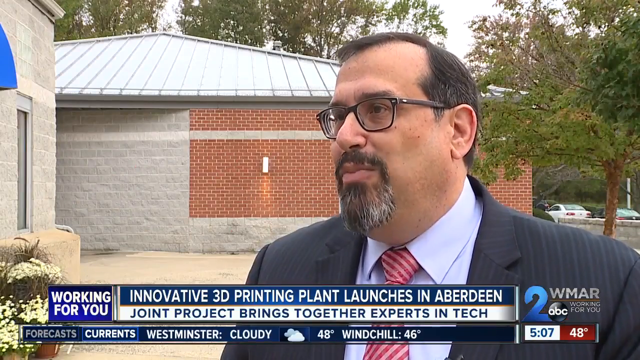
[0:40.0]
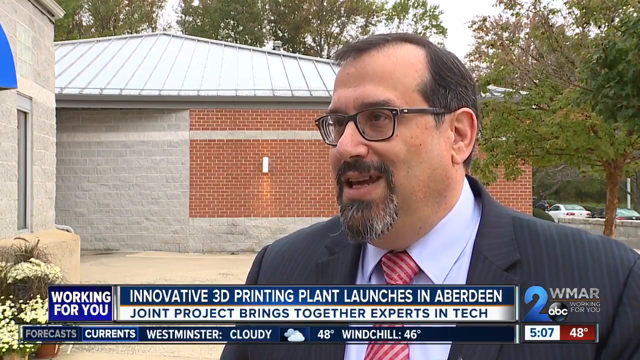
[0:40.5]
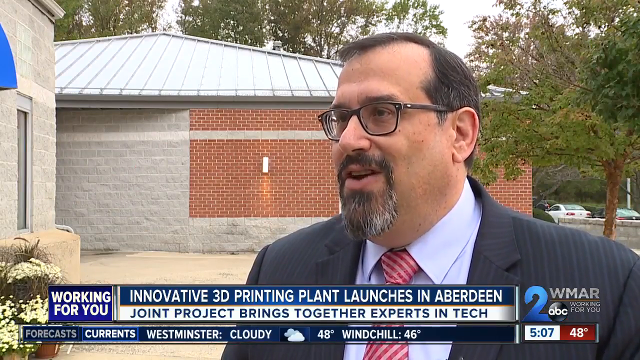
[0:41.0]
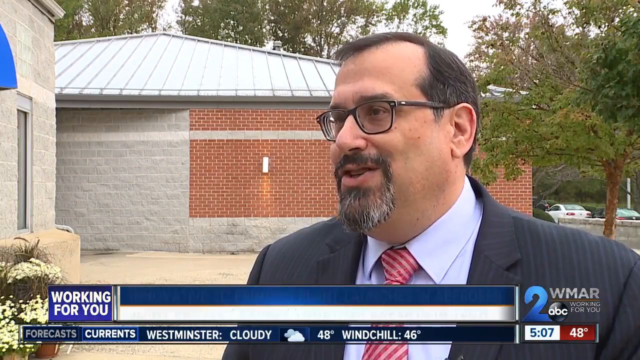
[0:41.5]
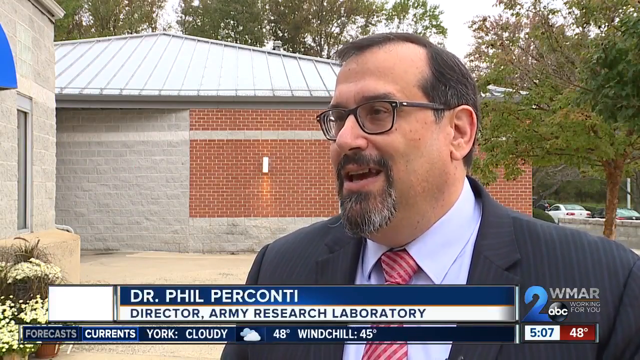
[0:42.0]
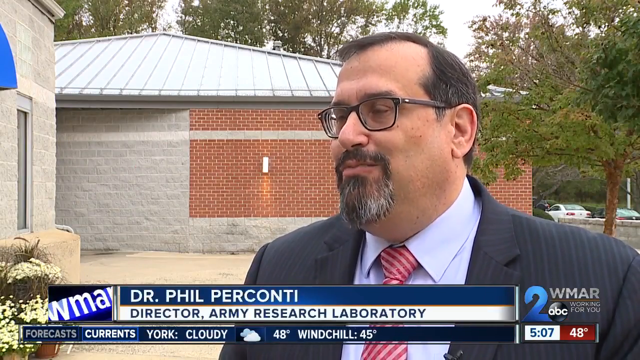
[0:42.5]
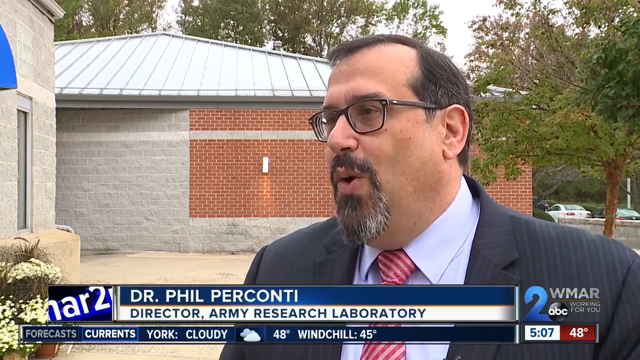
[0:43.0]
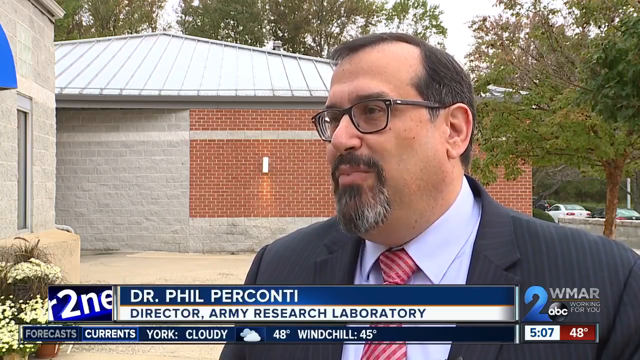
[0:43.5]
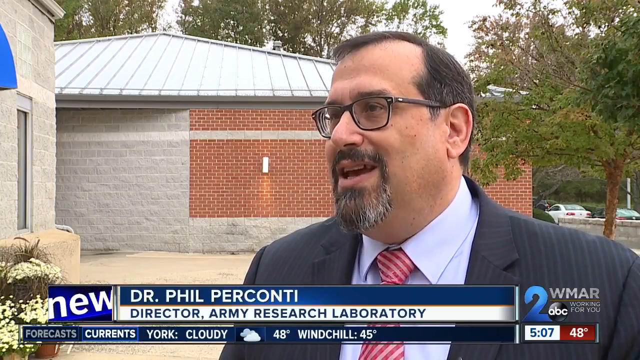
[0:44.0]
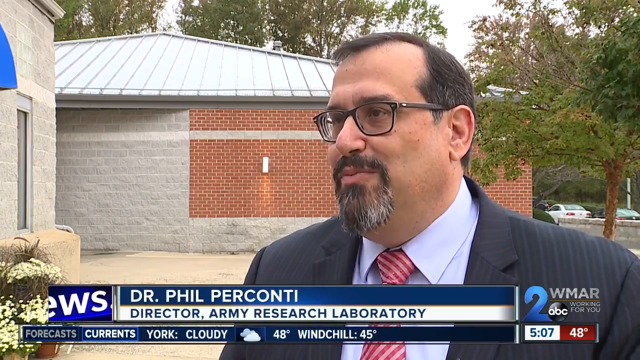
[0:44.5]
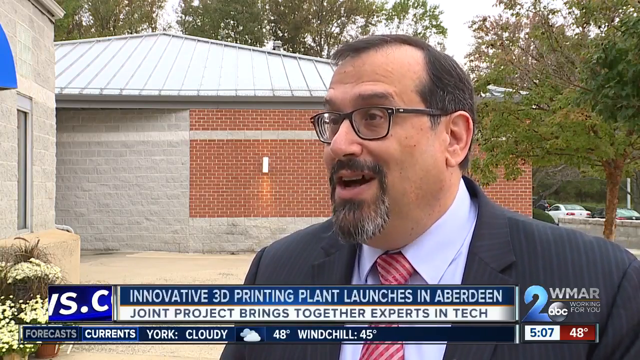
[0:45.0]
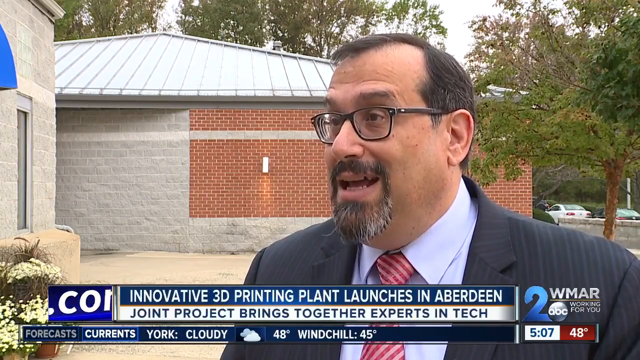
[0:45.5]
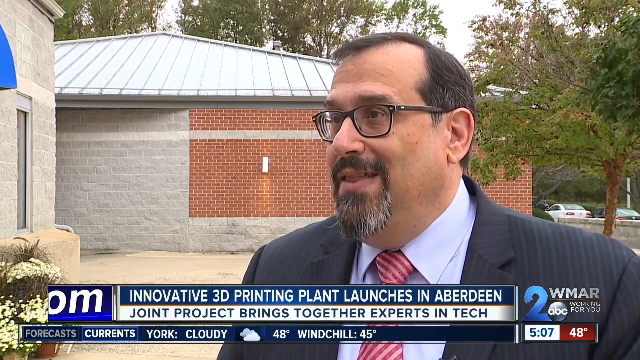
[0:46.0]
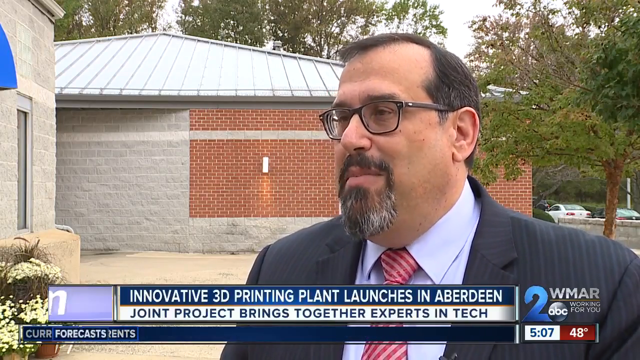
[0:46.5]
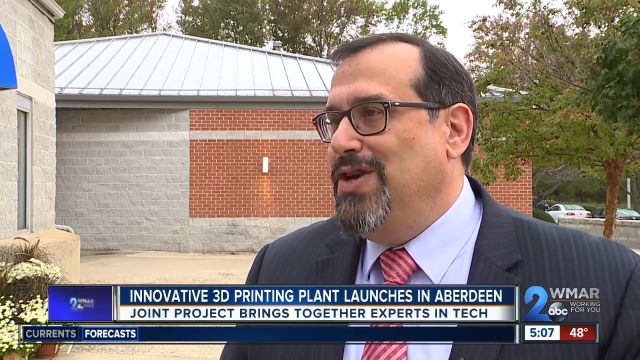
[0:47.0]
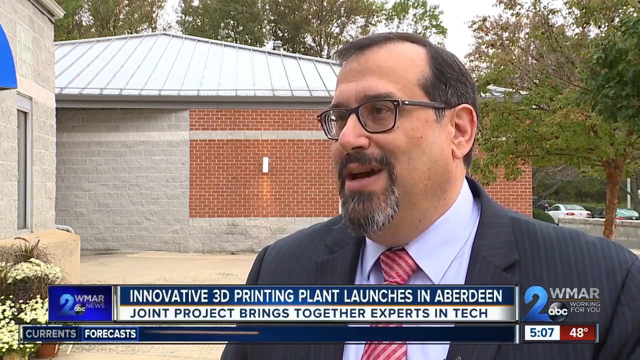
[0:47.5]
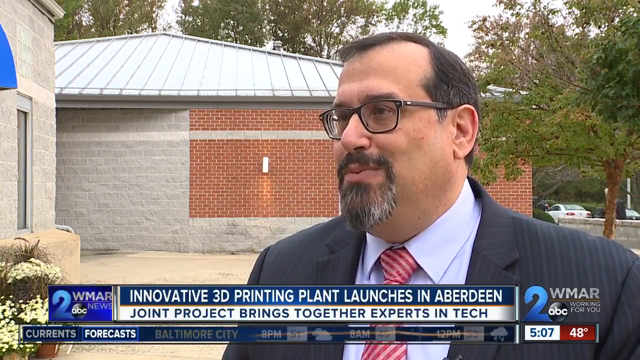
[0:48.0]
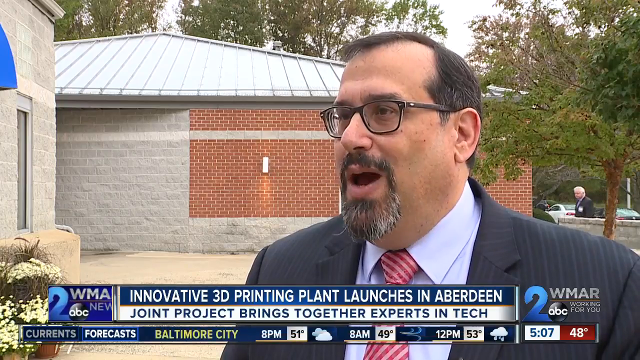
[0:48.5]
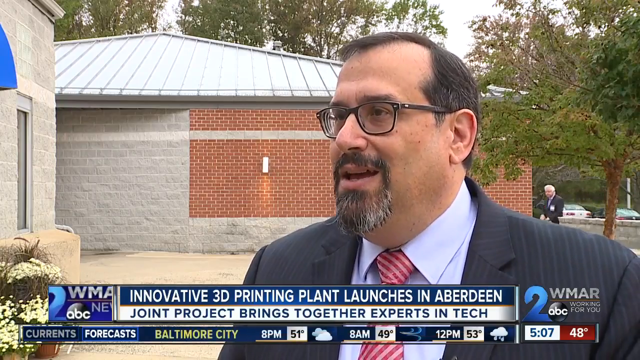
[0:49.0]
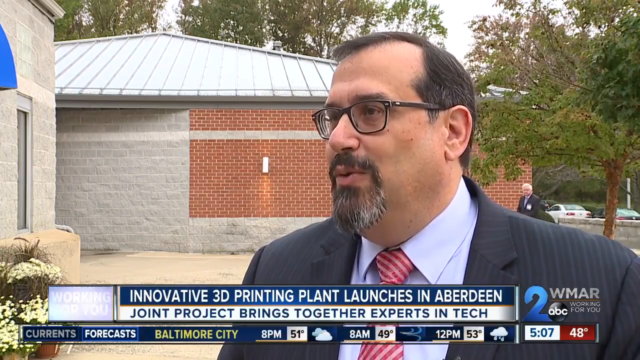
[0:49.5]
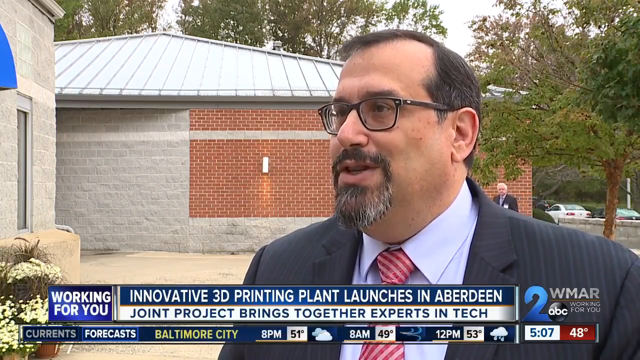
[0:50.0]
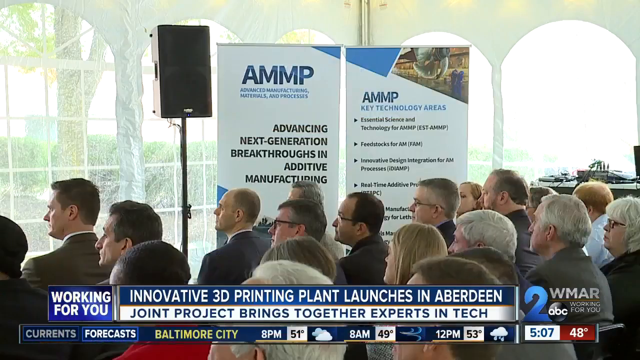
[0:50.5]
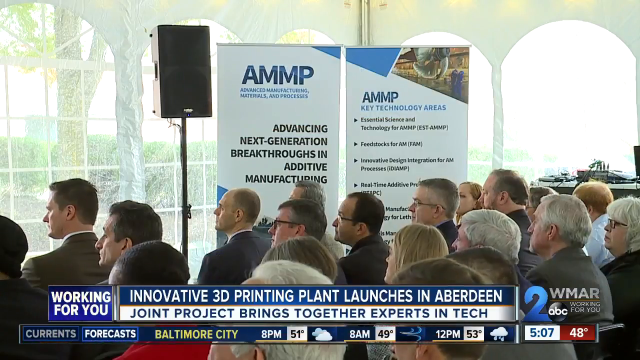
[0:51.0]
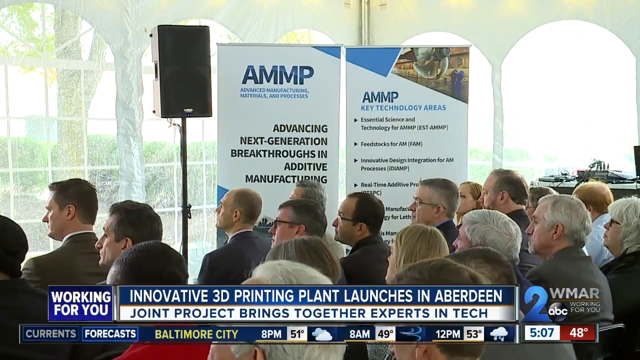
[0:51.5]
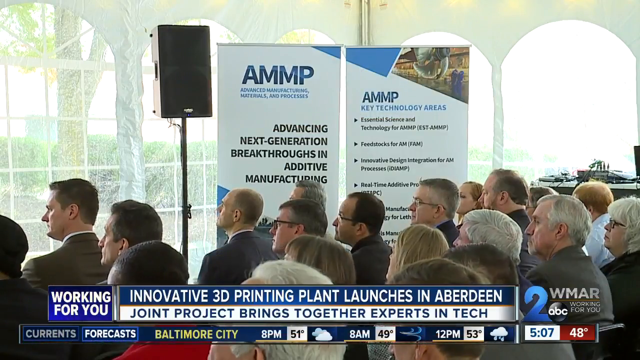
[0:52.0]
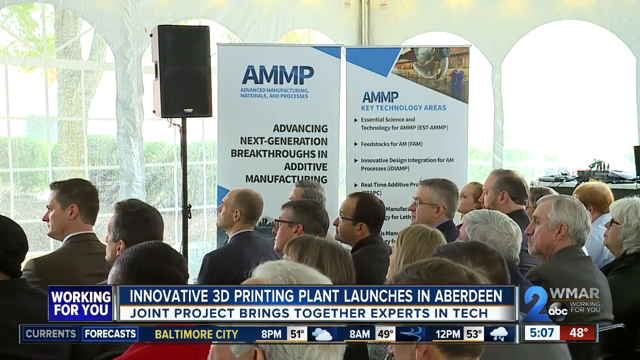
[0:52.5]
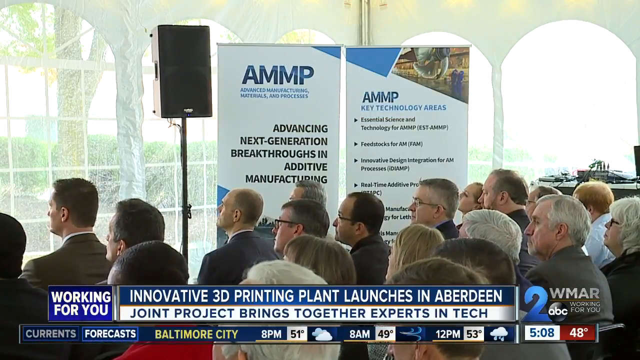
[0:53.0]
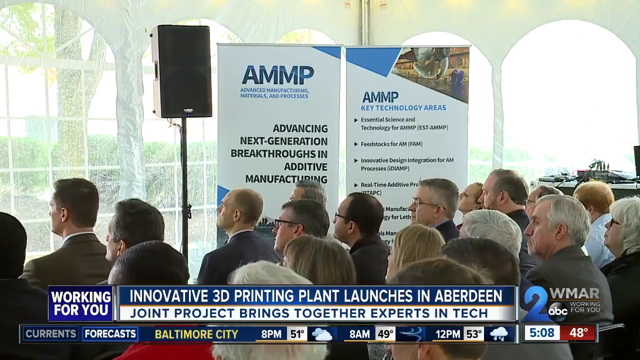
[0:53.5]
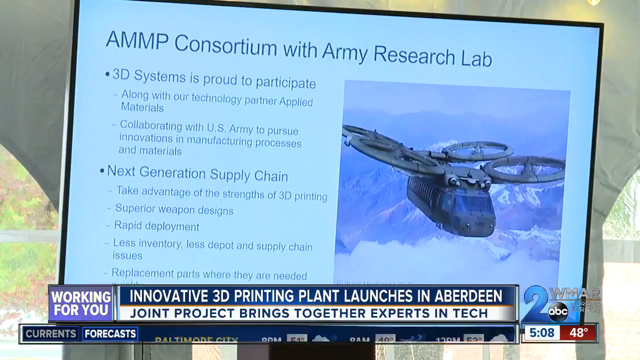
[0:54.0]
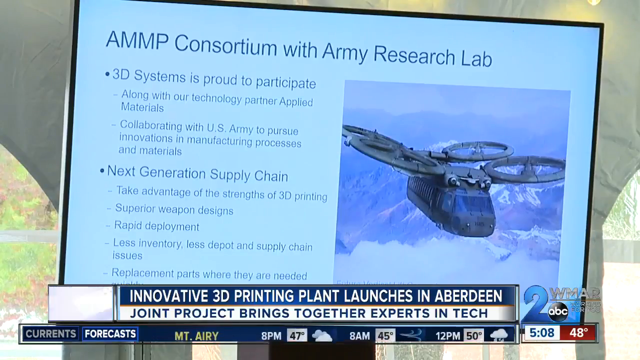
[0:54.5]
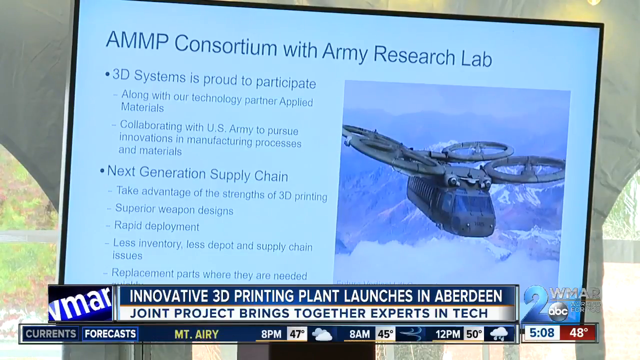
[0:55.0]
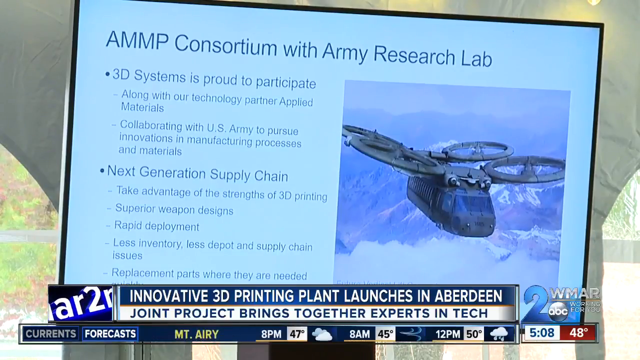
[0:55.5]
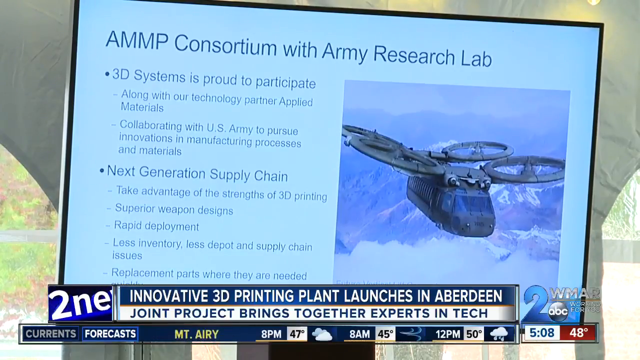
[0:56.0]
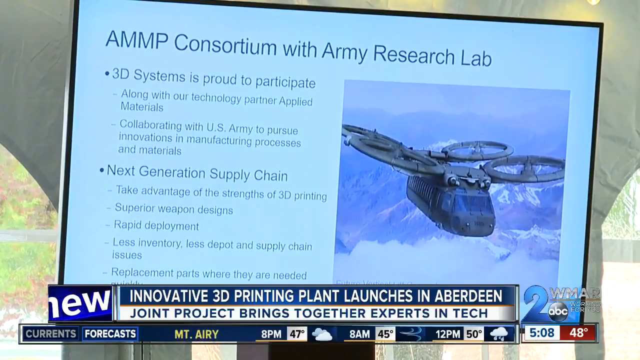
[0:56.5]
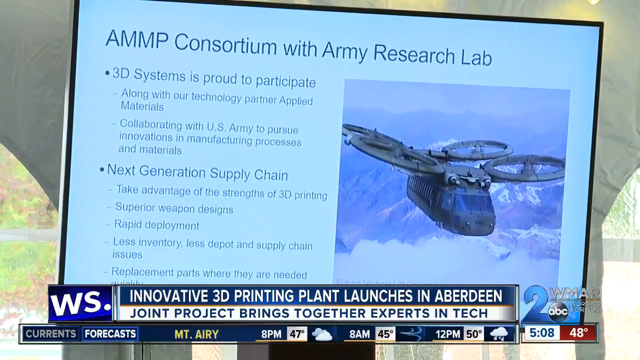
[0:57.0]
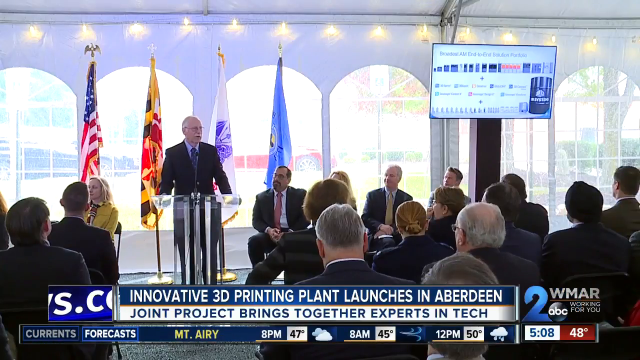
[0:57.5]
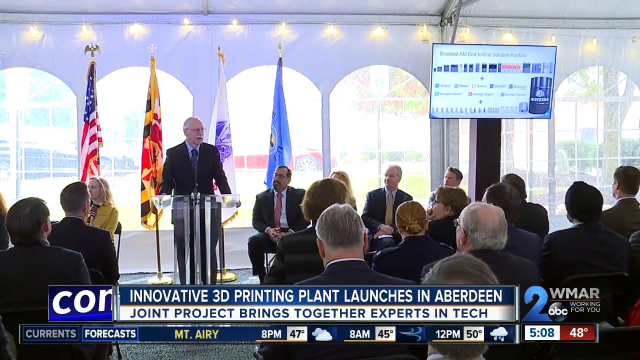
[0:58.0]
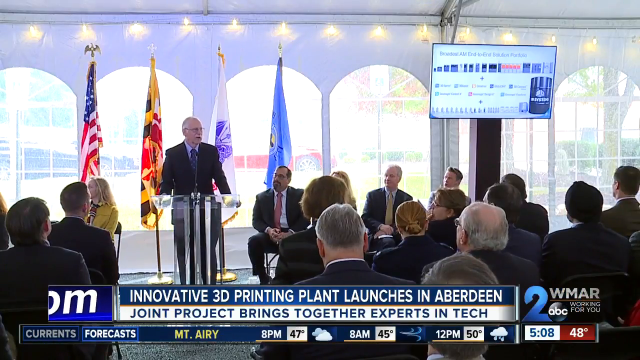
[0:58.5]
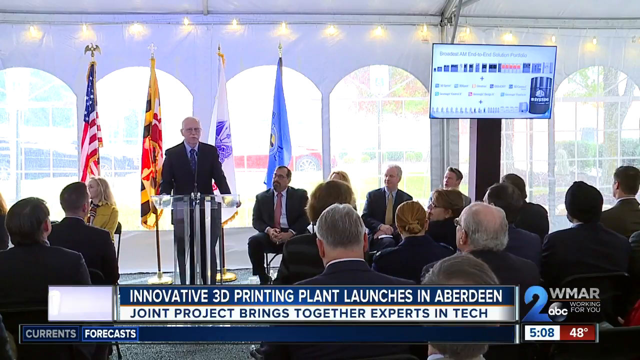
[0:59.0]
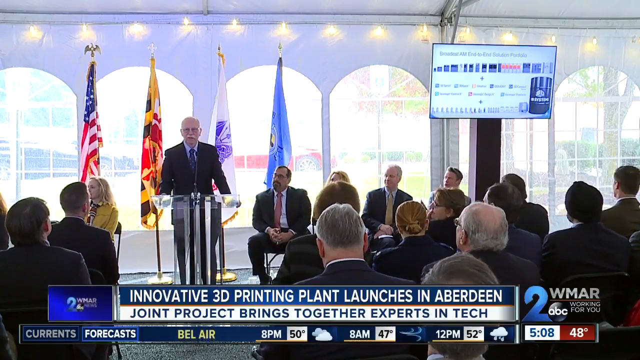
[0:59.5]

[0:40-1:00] In the field, reporter Mark Rober interviews Dr. Bill Perconti, Director of Army Research Laboratory, outside a building of red brick and cement blocks. Dr. Perconti speaks with a smile; he wears prescription glasses, has brown hair, a mustache and a goatee, and wears a blue pinstripe suit, a lighter blue collared shirt and a peppermint stick necktie. The scene moves inside a conference room where people appear to be listening to a lecture. A sign reads "AMMP Consortium with Army Research Lab. 3D Systems is proud to participate. Next generation supply chain." A wider view shows the room filled with seated people, a stage where men are seated, and a podium where a man stands addressing the crowd. Arched windows are on the wall behind him, and a screen with images on it is up high for the people to refer to.